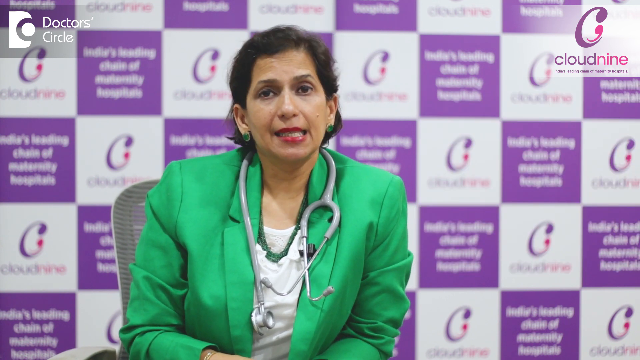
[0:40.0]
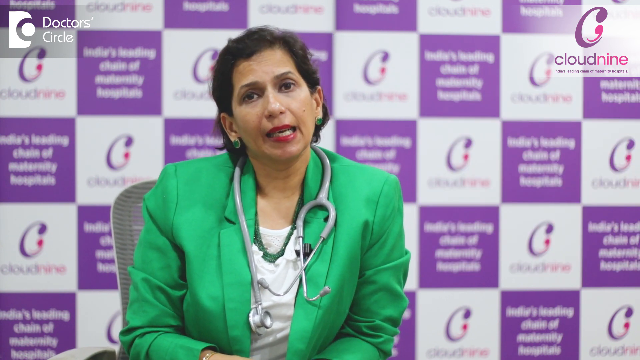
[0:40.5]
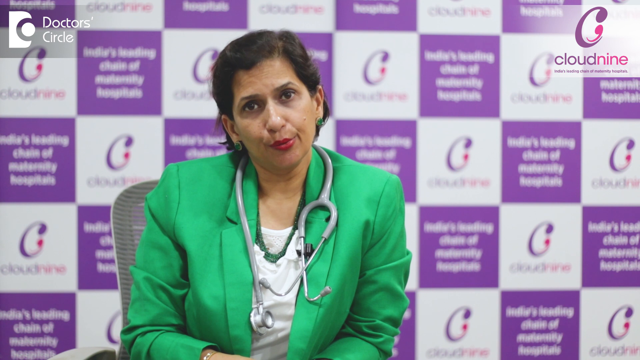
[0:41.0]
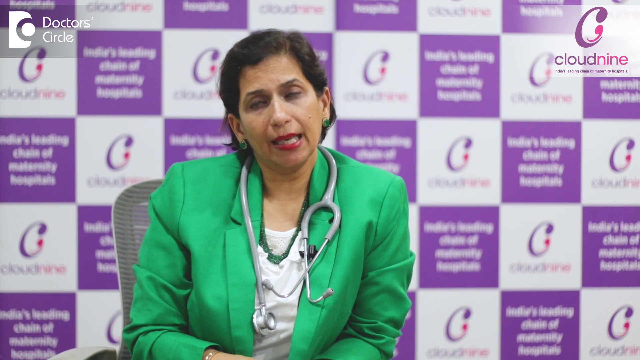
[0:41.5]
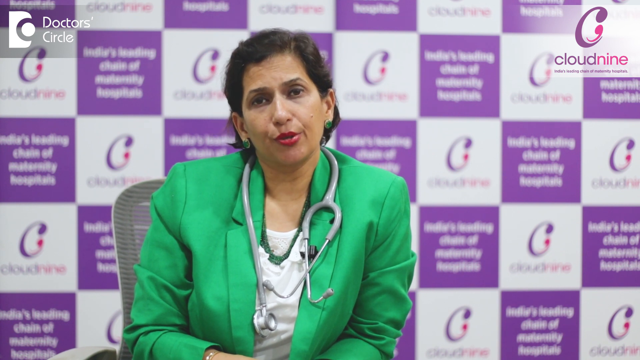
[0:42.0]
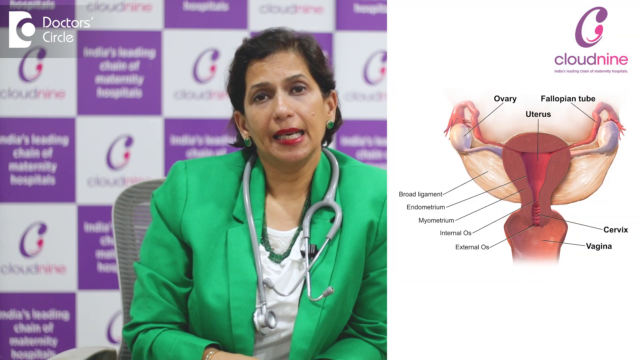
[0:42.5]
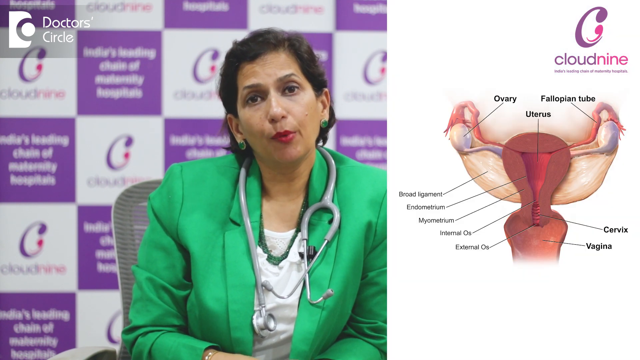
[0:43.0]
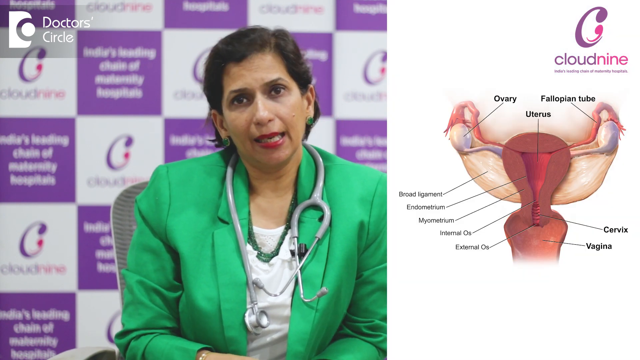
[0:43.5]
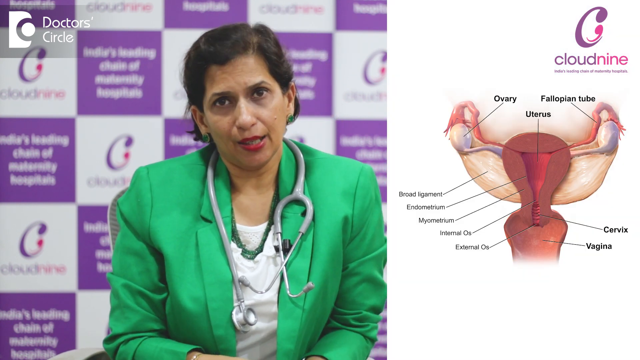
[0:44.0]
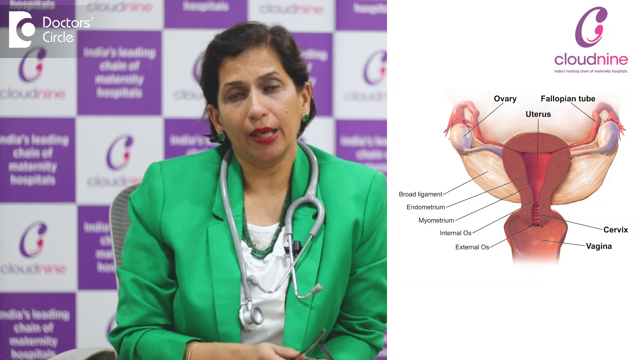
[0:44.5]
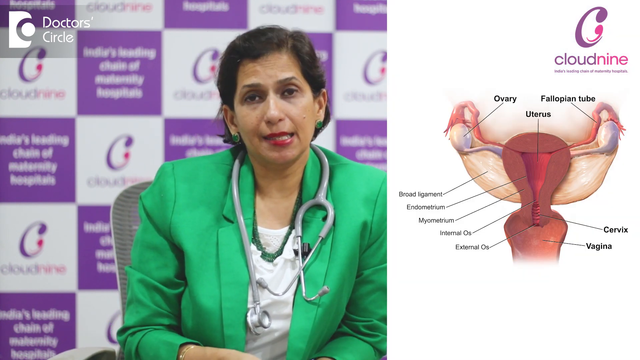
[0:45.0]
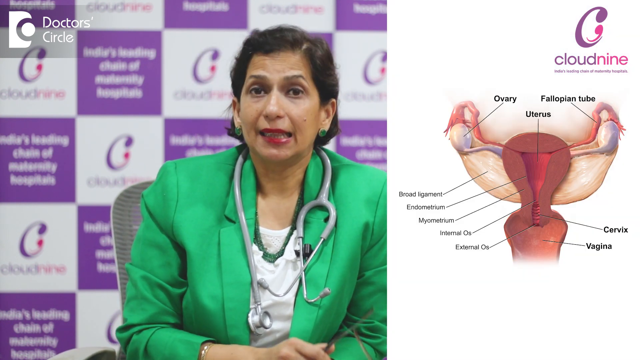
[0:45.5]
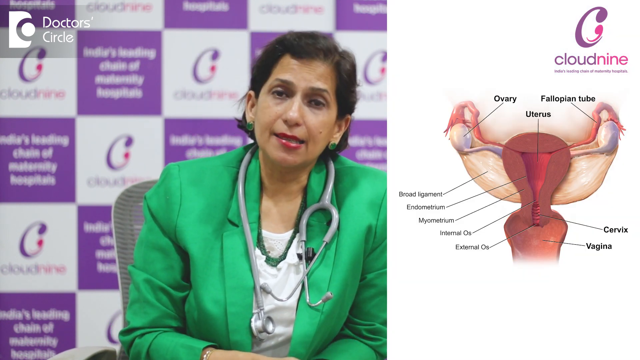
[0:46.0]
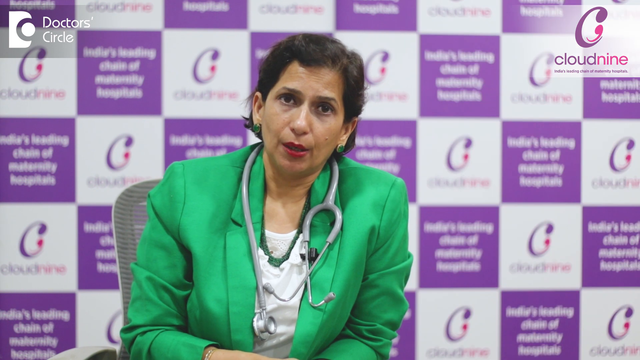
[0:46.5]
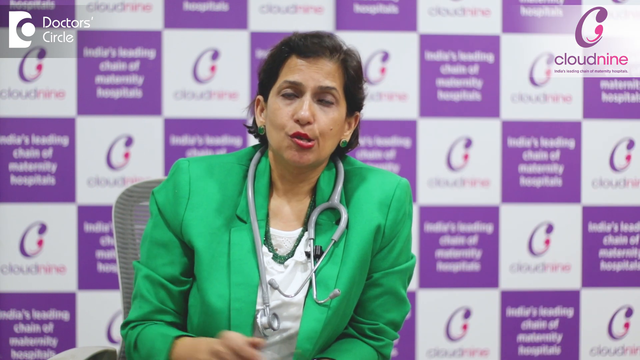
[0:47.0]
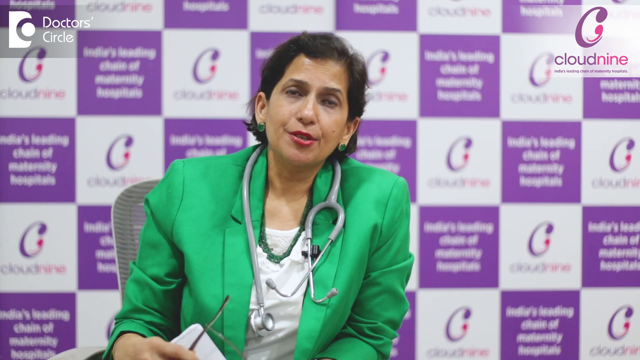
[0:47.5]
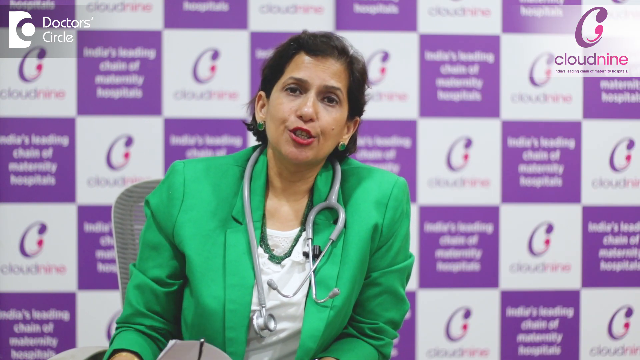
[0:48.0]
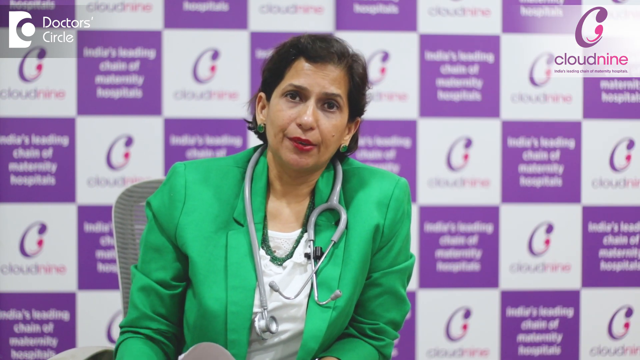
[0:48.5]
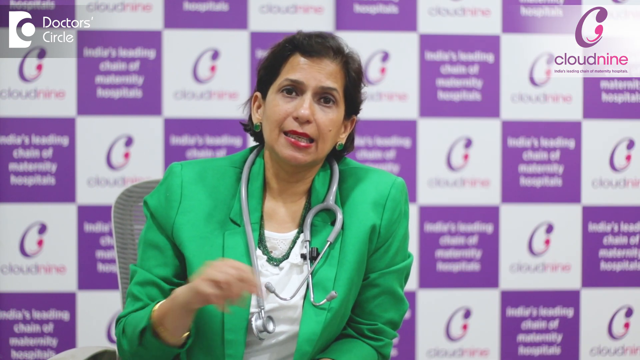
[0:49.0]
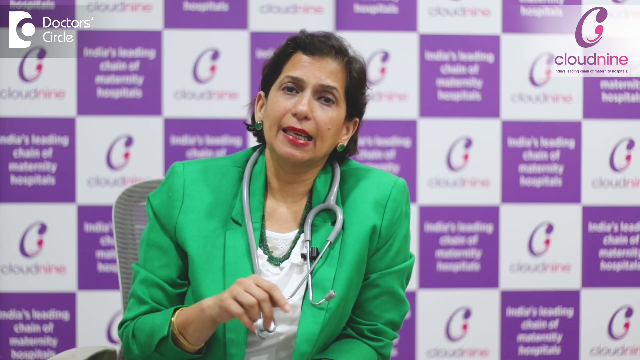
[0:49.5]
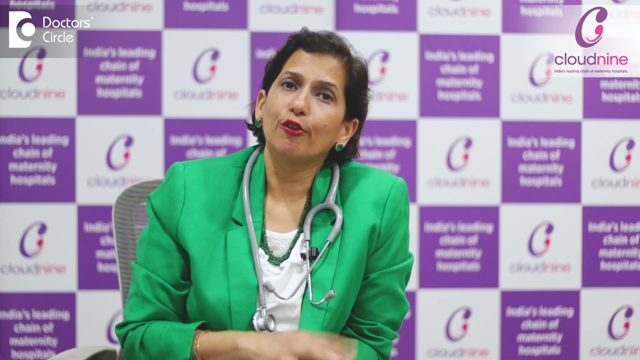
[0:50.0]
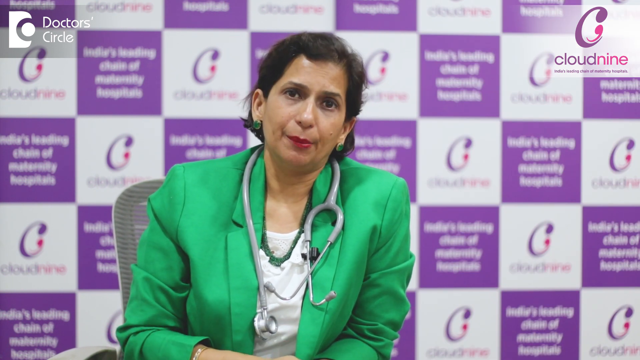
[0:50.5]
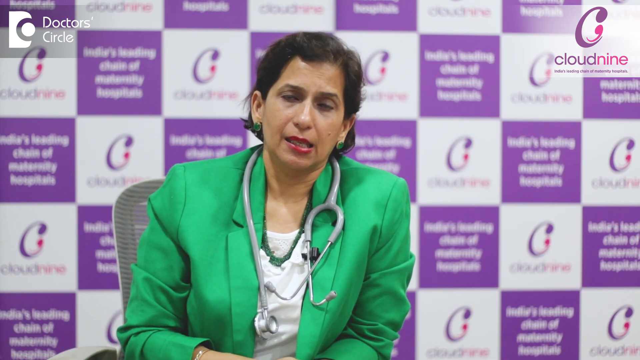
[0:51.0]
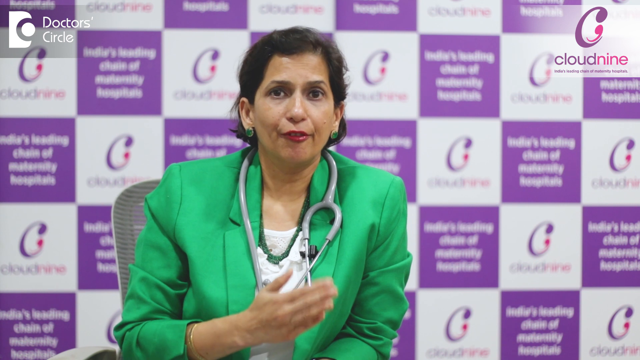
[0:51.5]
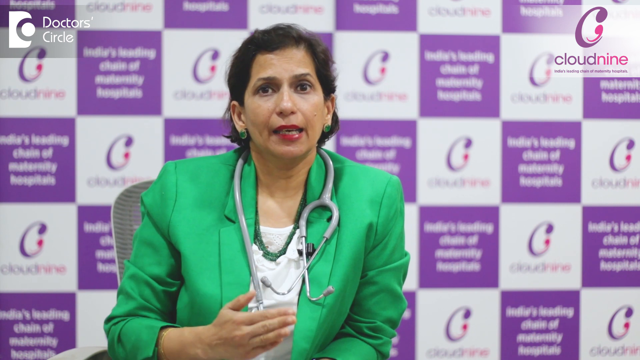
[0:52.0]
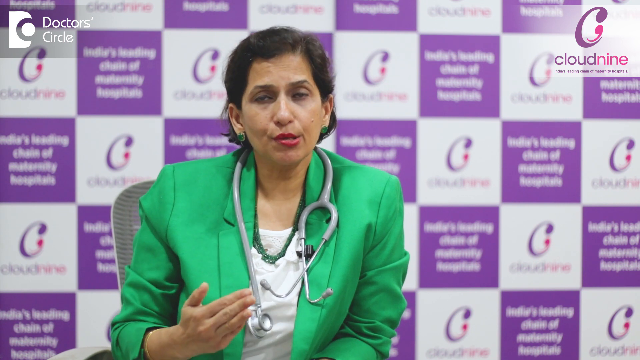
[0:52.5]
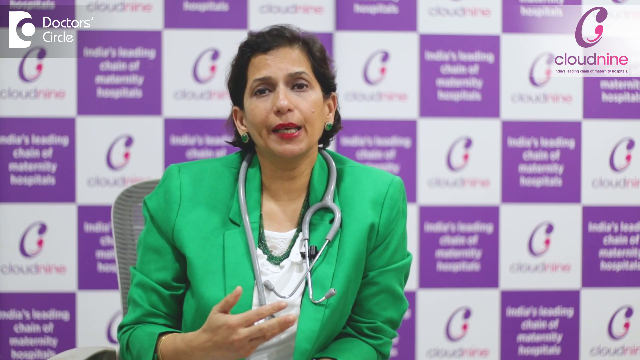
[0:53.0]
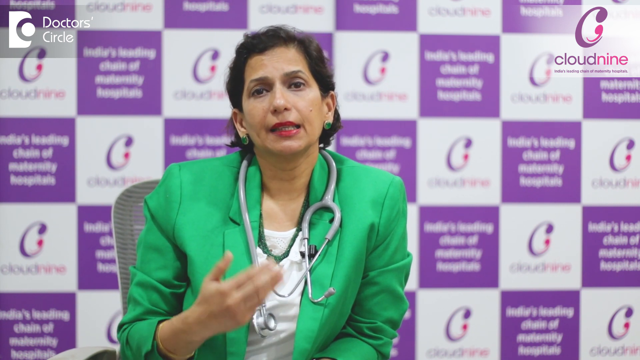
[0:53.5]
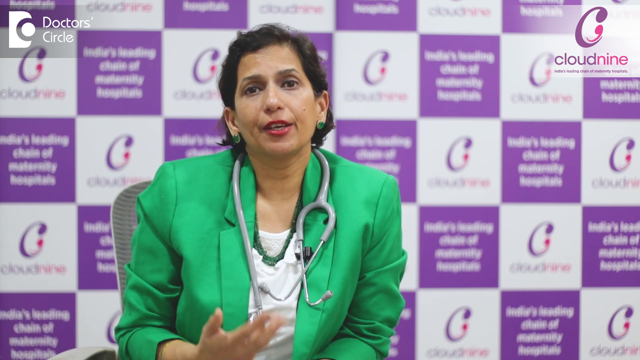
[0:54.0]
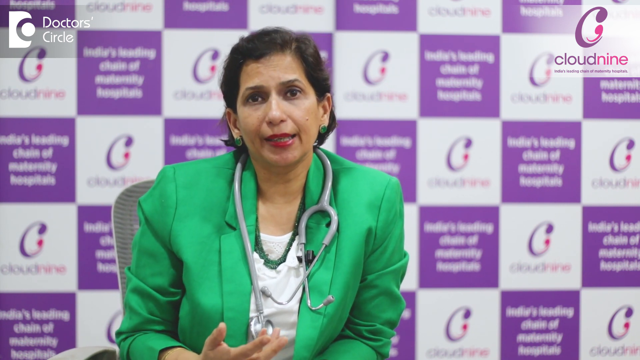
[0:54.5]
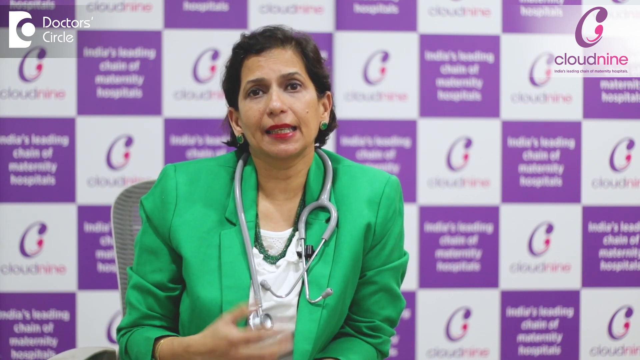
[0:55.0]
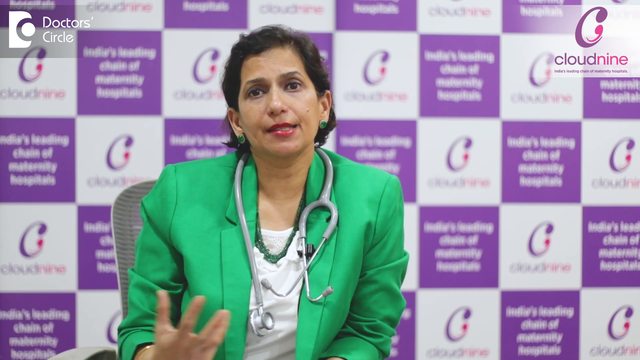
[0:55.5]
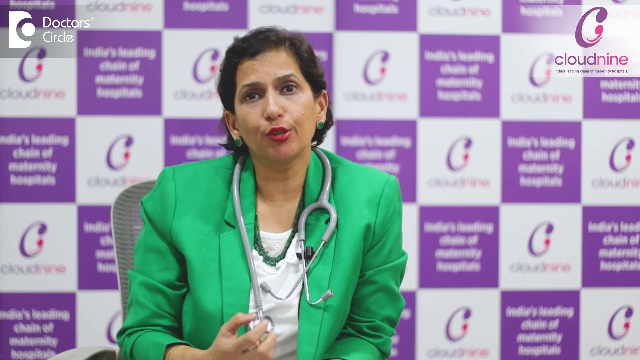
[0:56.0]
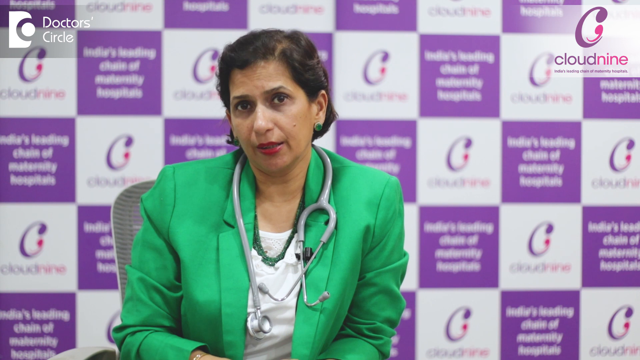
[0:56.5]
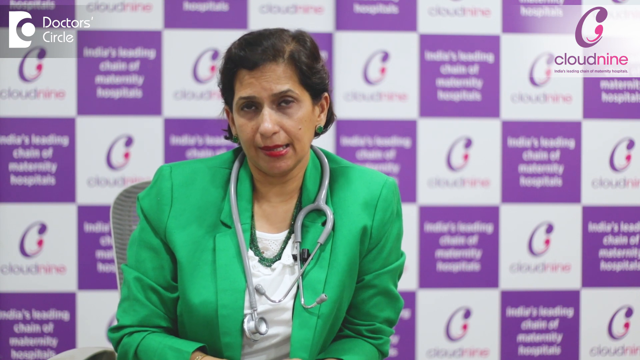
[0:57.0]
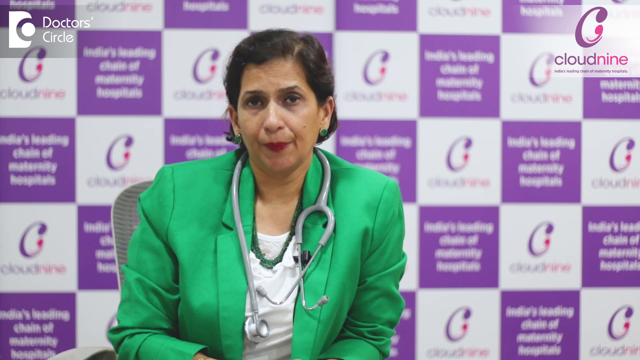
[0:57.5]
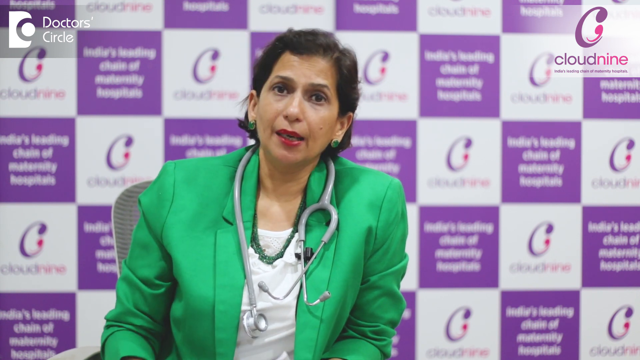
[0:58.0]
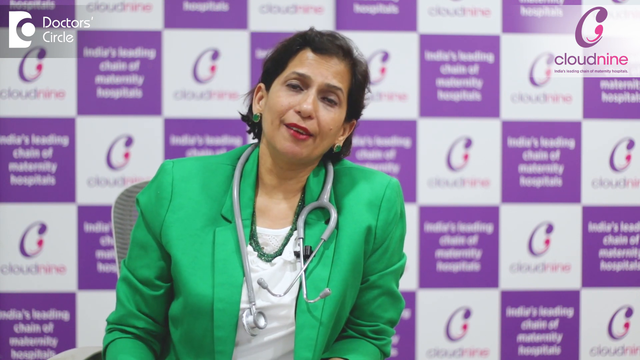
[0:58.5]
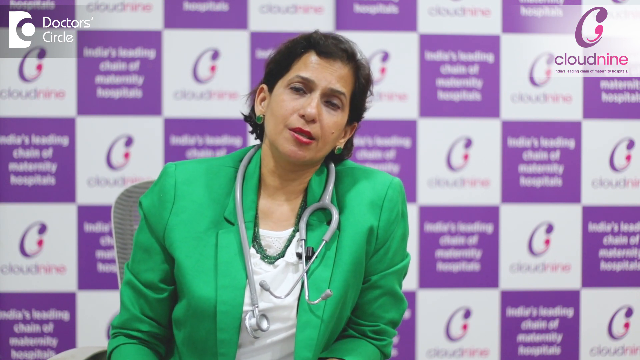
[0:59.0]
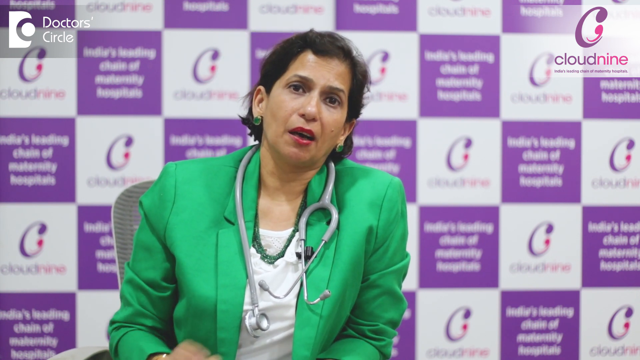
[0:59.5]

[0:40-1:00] A lady with short black hair, a green blazer, green earrings and red lipstick talks to the camera. Text in the left corner of the screen reads "Doctor's Circle", and text in the right corner reads "Cloud Nine". As she talks, her head tilts to the right and nods very slightly up and down, forward and back. She suddenly but slightly moves to her right in an almost sitting-up, straightening motion, then comes back down with her head still tilted right. She then leans forward and to the left, her head tilting left, as an image appears on screen: the interior of the body showing a uterus, with text and lines pointing to the uterus, ovary and fallopian tube. As the image disappears, she moves her head more to the left. Her right hand briefly lifts into frame, showing the fingers, then disappears, then comes back much more prominently. The hand moves up and to her left, looking sort of like a fist, then comes down quickly as the fingers straighten. It briefly leaves the frame, then reappears with the fingers straight and together and the thumb apart, moving in front of her body. As she speaks, the fingers move apart while the thumb stays in the same straightened position, then come back together as she makes a point. The four fingers then stay more apart, palm facing her and the back of the hand facing the camera. The hand disappears below the frame and she continues talking with her head tilted to the left.